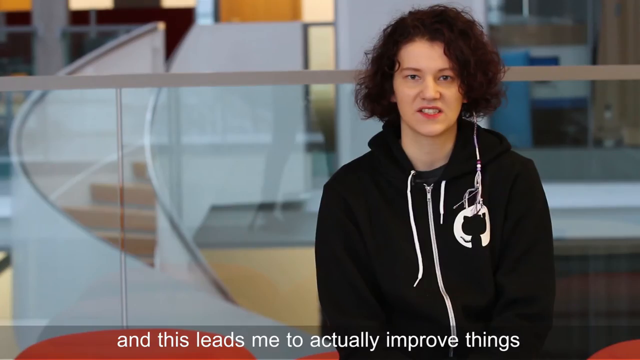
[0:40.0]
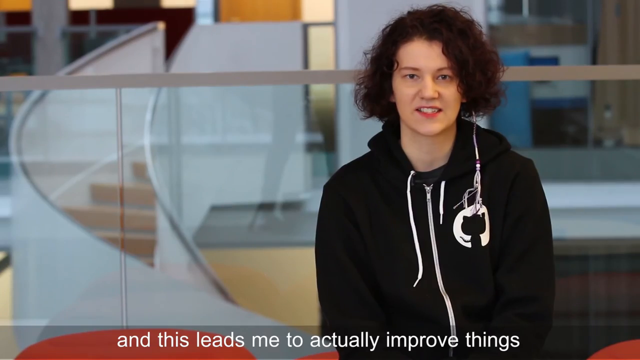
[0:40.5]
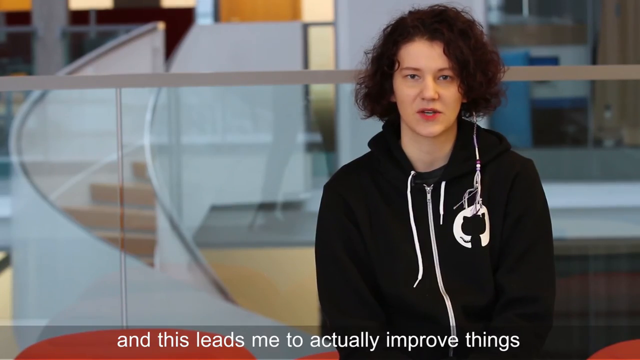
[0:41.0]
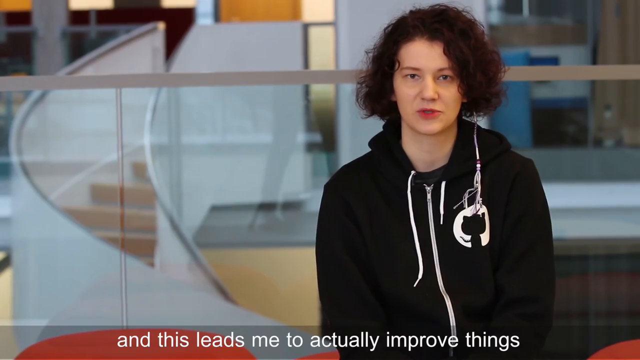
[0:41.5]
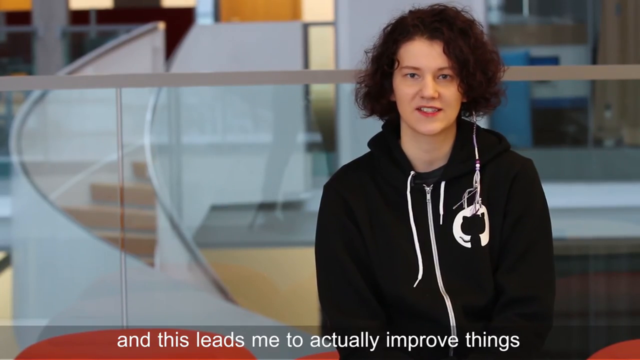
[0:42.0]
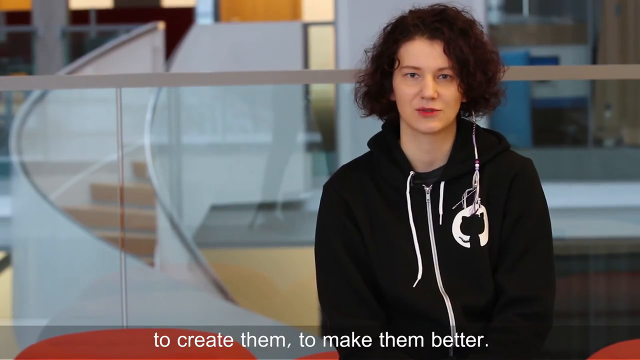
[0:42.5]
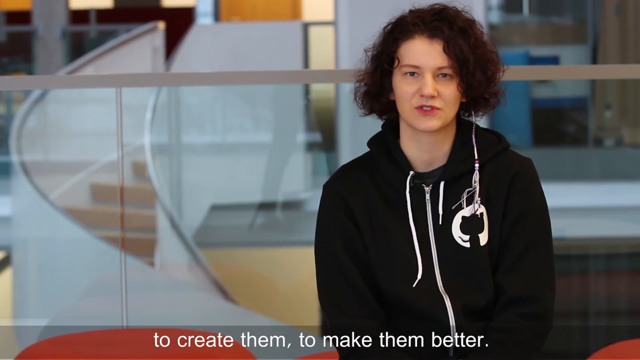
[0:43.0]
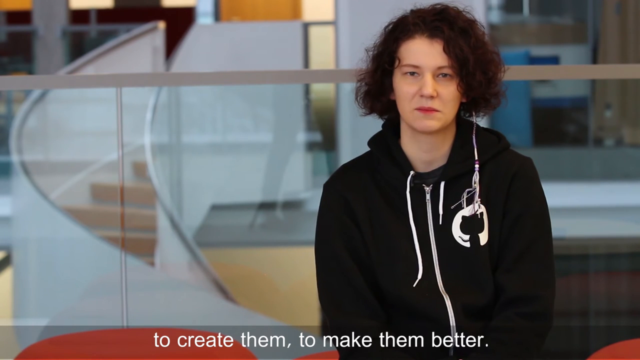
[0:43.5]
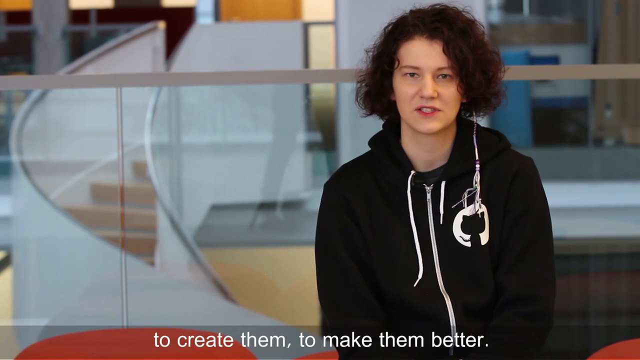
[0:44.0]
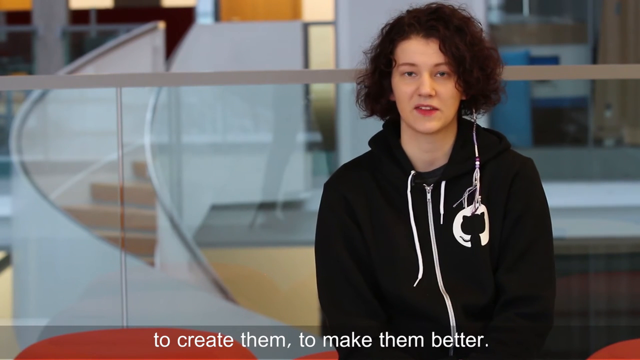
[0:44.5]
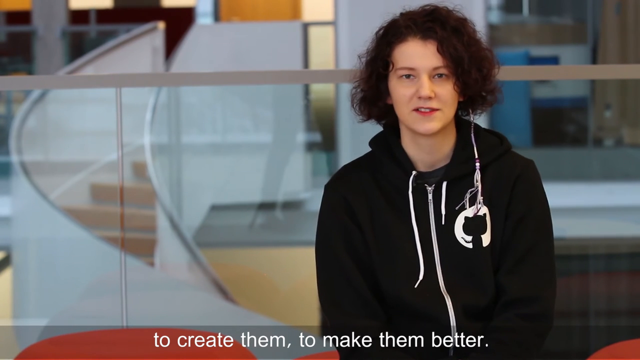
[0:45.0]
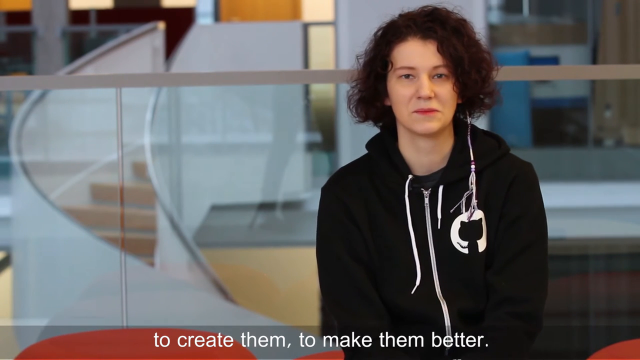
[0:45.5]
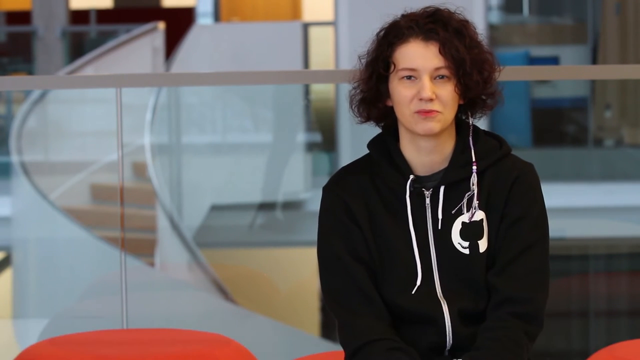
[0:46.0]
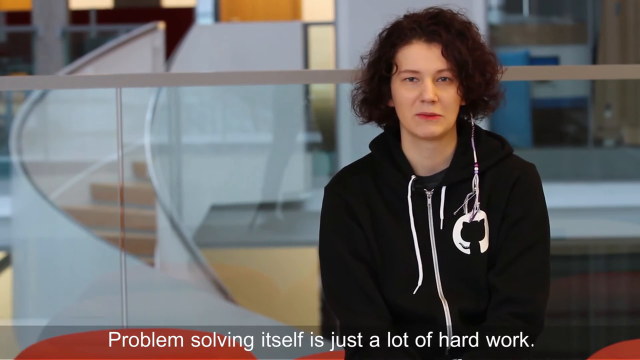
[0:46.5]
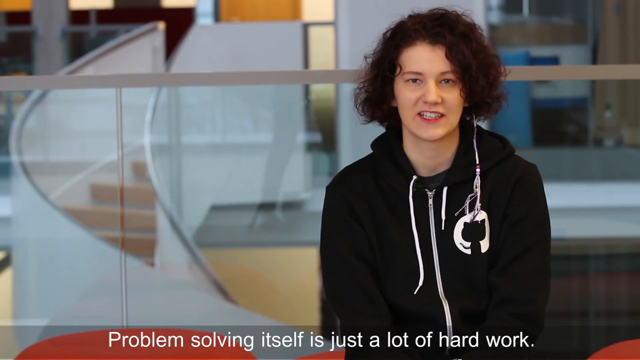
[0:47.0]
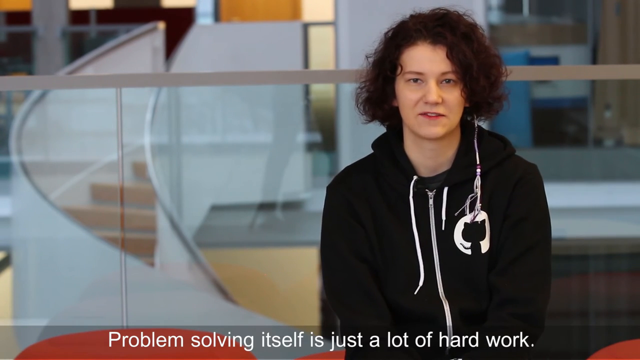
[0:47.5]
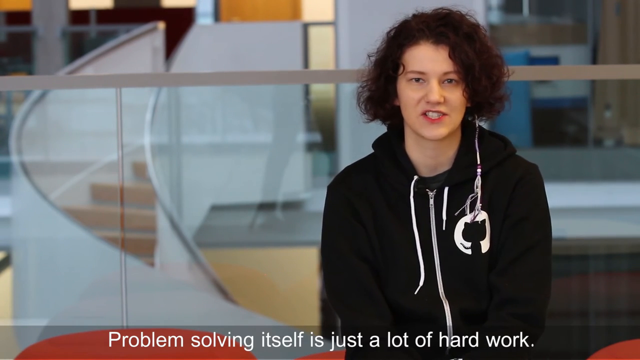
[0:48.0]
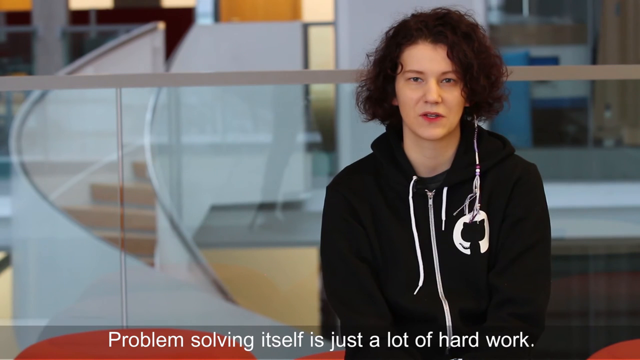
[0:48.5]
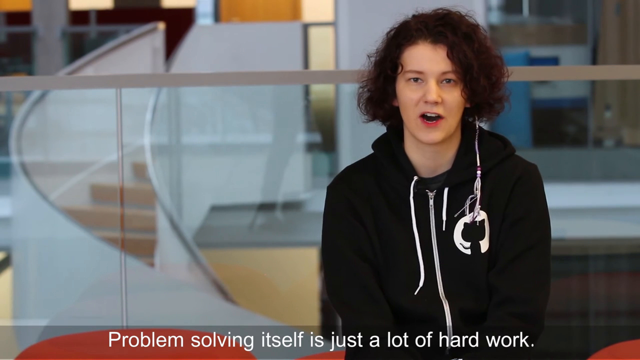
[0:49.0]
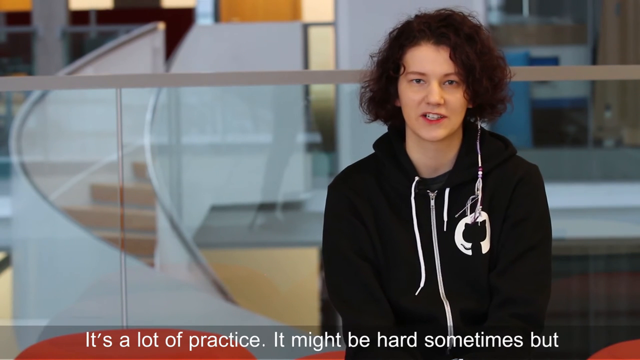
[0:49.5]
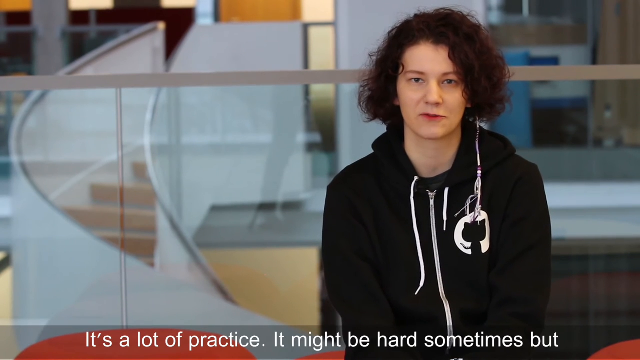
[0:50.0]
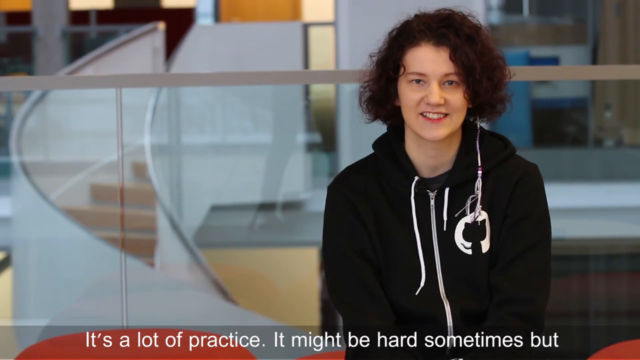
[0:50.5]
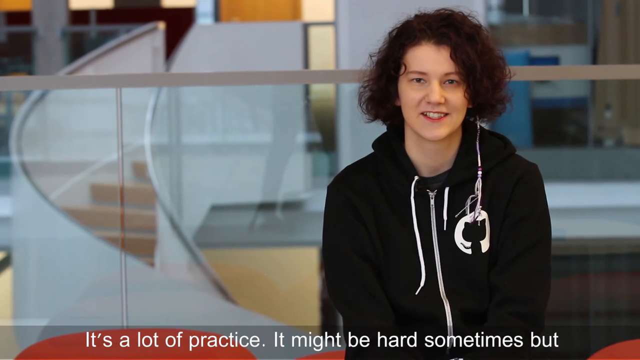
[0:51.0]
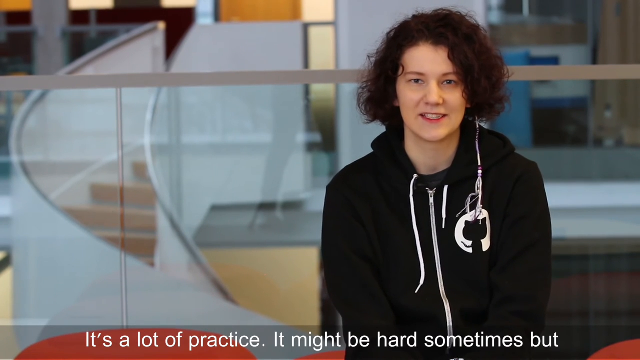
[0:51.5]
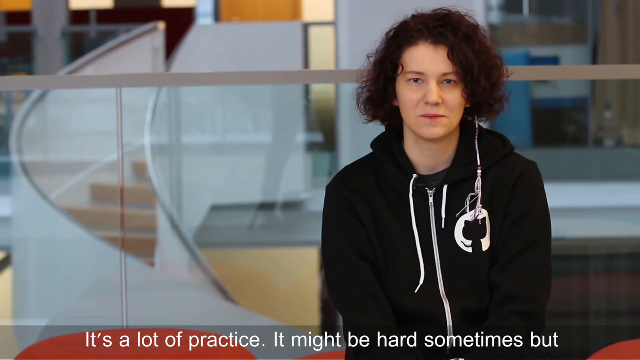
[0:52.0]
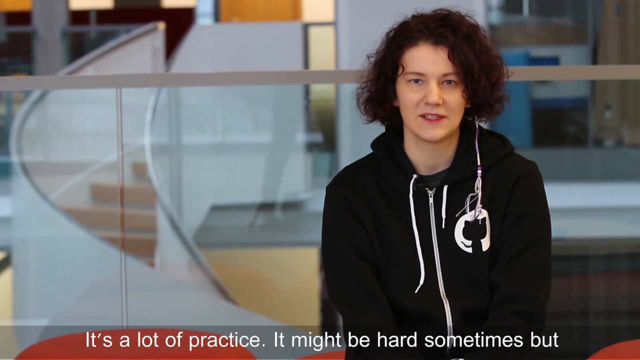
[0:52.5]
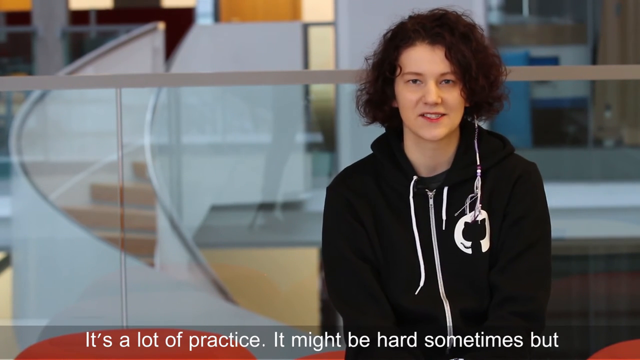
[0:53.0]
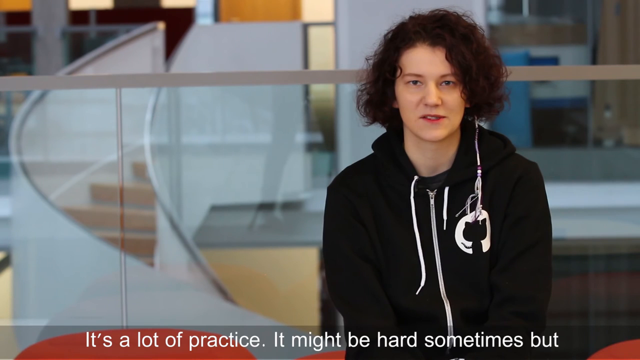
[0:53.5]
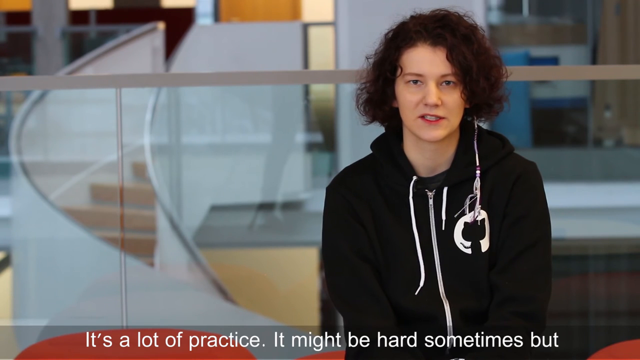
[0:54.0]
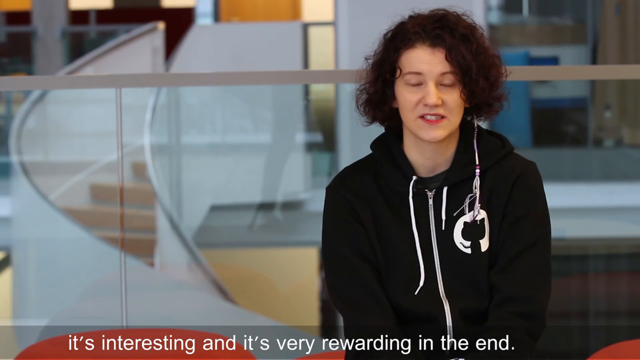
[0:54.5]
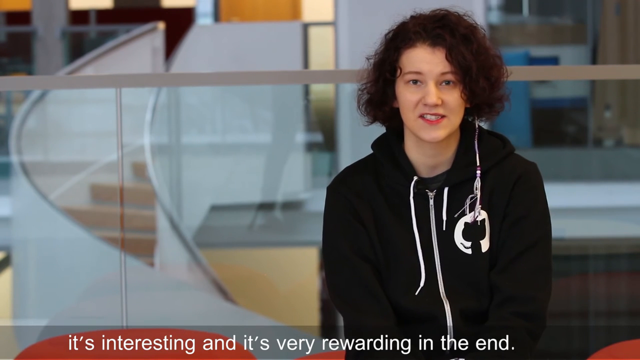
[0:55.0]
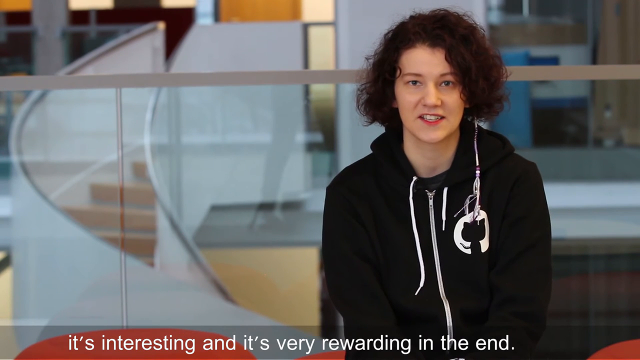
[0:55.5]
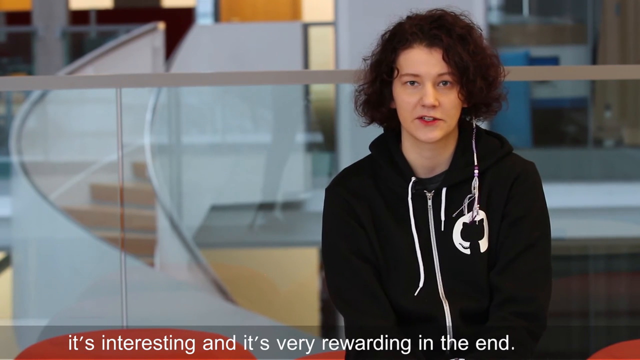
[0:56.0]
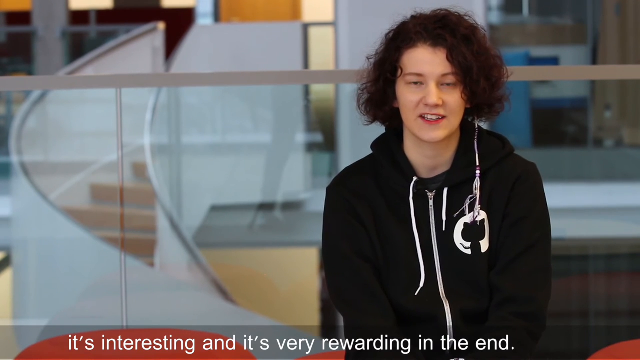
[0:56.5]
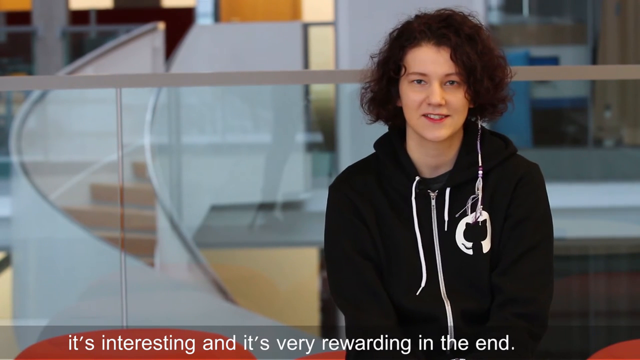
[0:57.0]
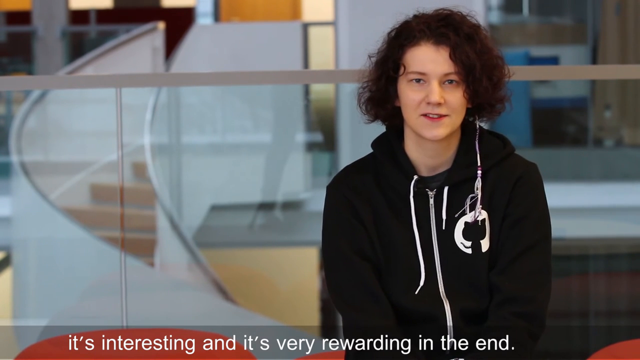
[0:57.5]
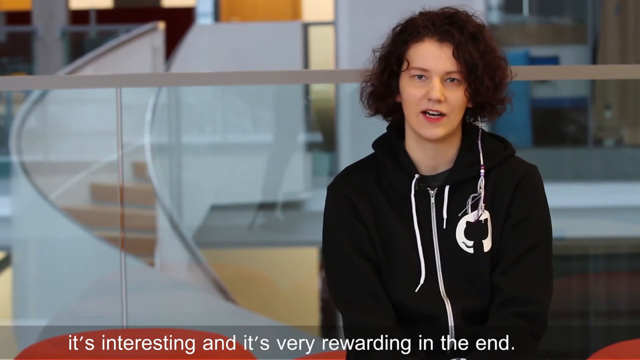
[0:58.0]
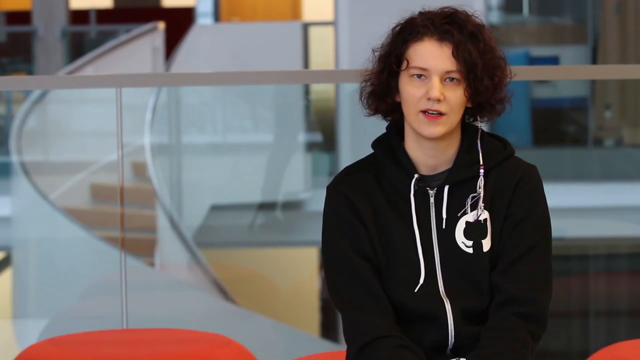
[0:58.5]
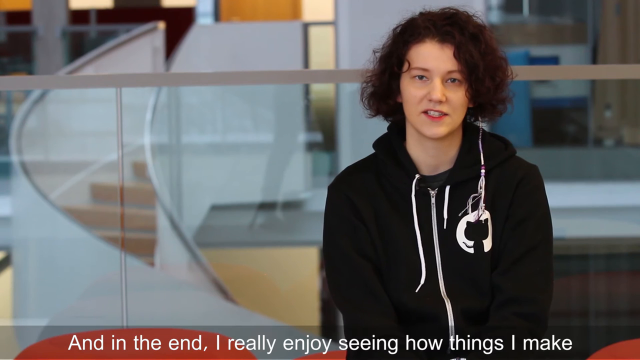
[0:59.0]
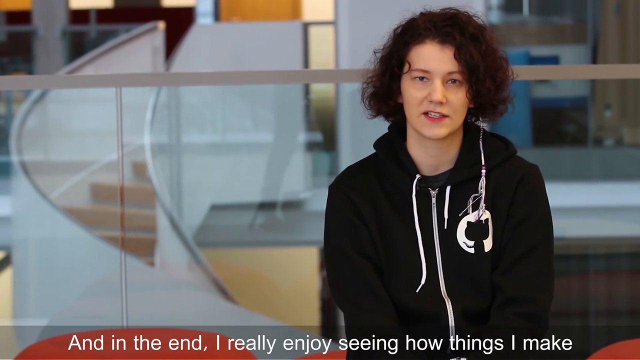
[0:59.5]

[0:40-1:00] A woman who looks to be in her early or mid 20s has short, curly brown hair and wears a hoodie jacket that looks pretty new, with a small white and black kitty cat logo on the right near the zipper. Behind her is a very large glass window, and through it a windy staircase made of a thin white material with silver handrails is visible. Text at the bottom of the screen reads "and this leads me to actually improve things, to create them, to make them better. Problem solving itself is just a lot of hard work. It's a lot of practice. It might be hard sometimes. But it's interesting and it's very rewarding in the end."